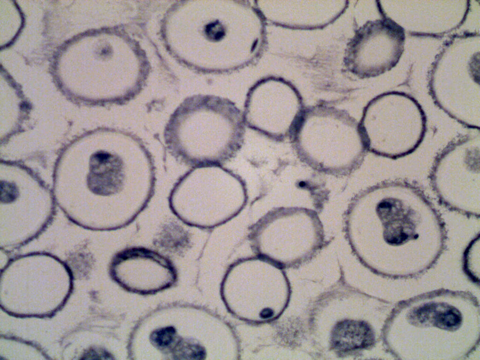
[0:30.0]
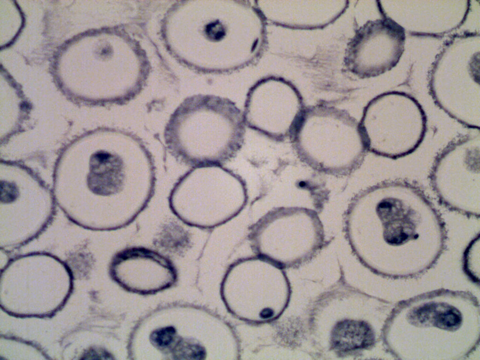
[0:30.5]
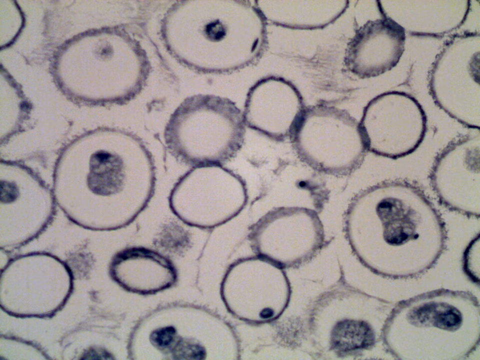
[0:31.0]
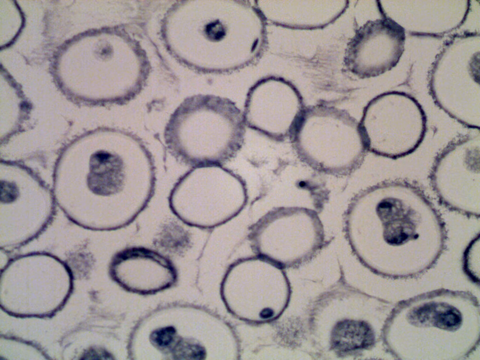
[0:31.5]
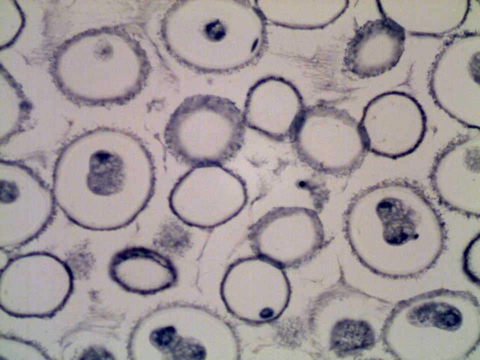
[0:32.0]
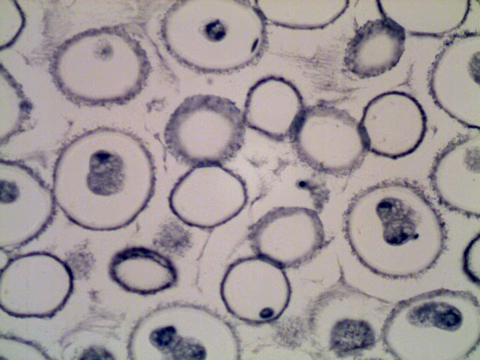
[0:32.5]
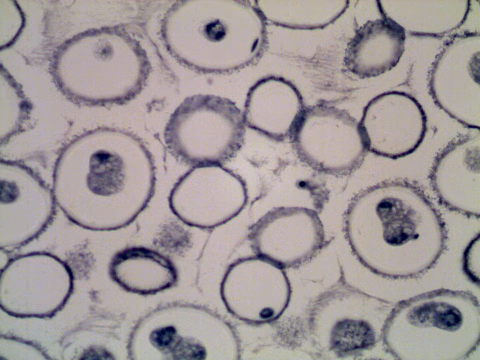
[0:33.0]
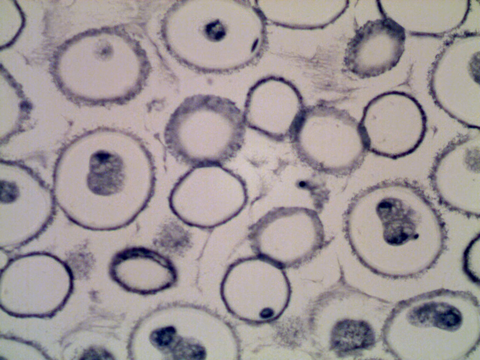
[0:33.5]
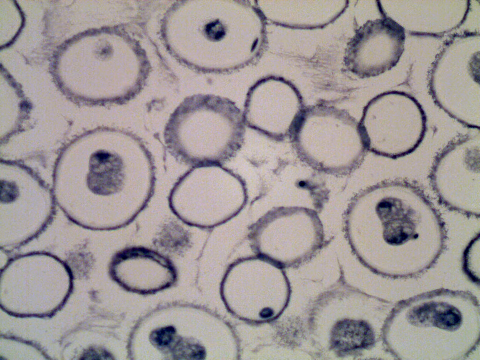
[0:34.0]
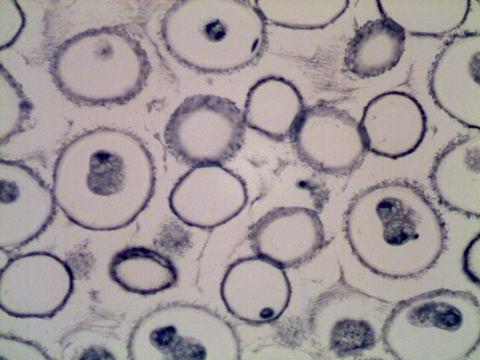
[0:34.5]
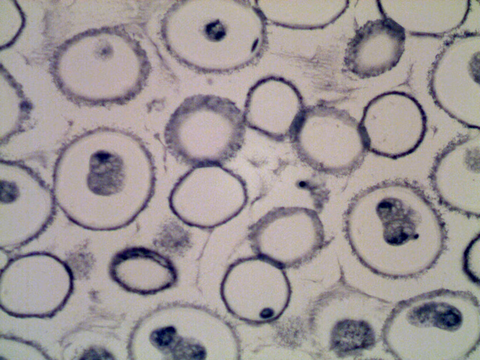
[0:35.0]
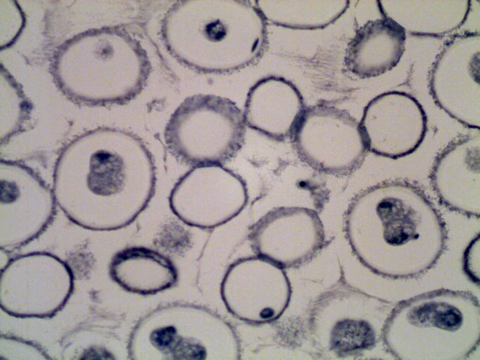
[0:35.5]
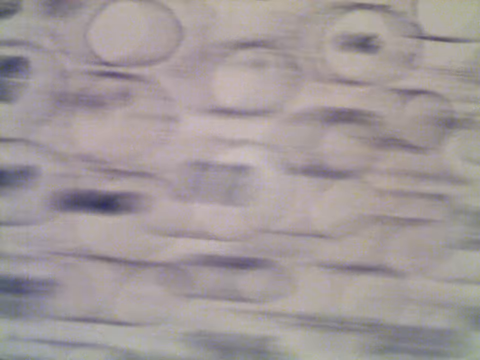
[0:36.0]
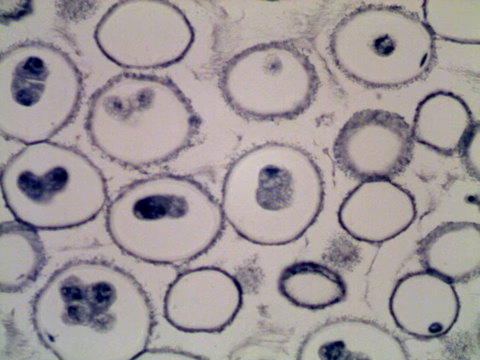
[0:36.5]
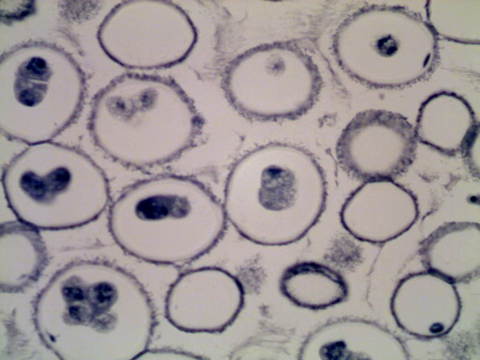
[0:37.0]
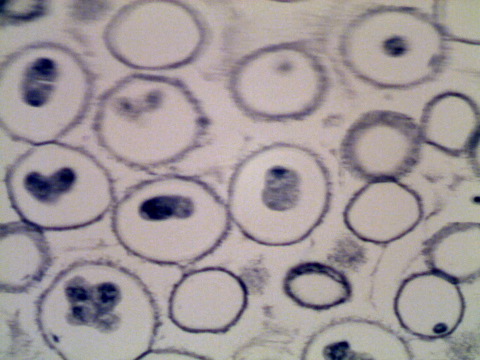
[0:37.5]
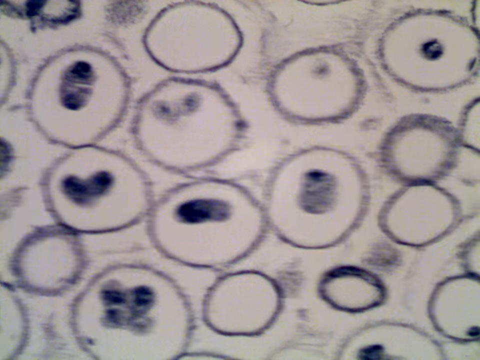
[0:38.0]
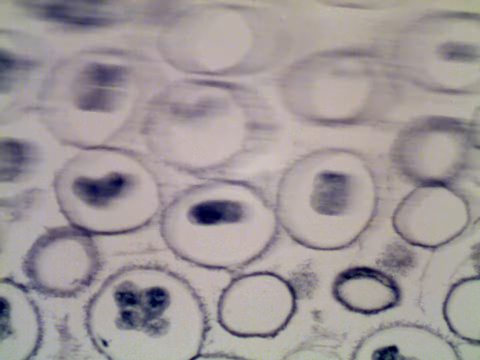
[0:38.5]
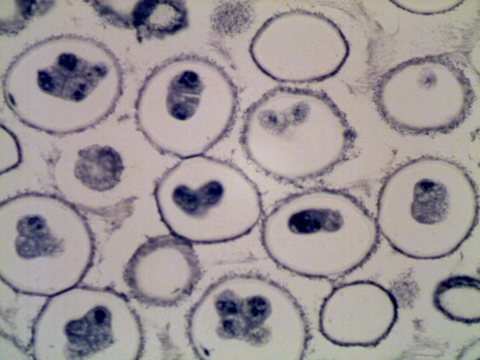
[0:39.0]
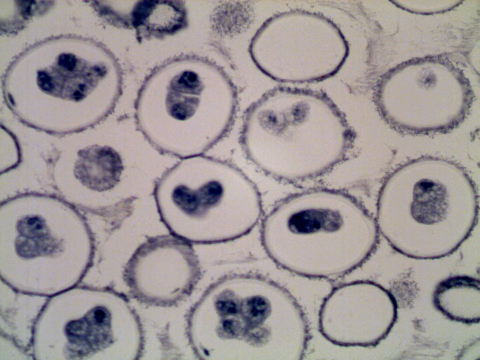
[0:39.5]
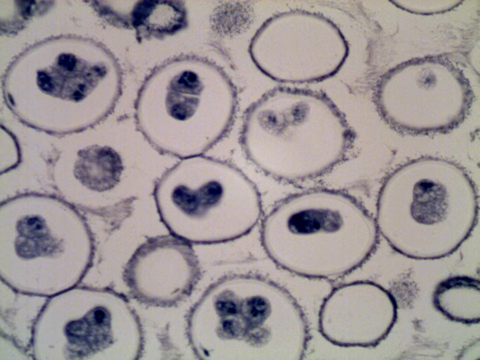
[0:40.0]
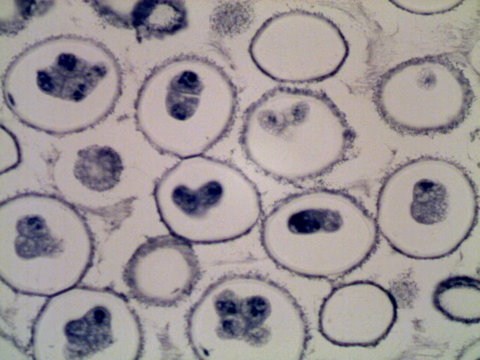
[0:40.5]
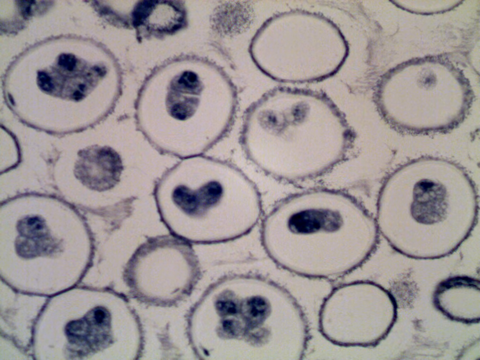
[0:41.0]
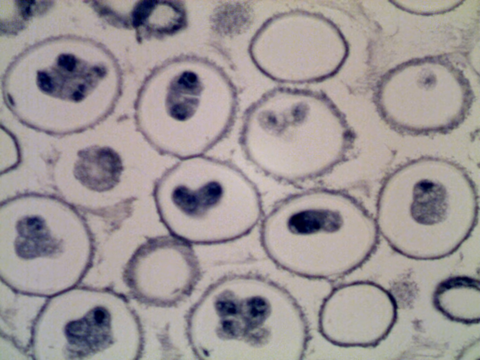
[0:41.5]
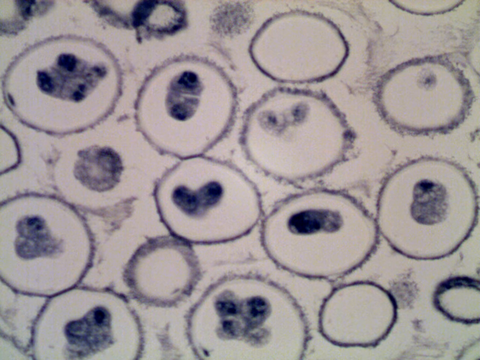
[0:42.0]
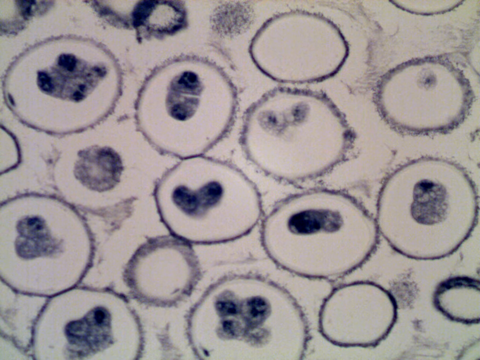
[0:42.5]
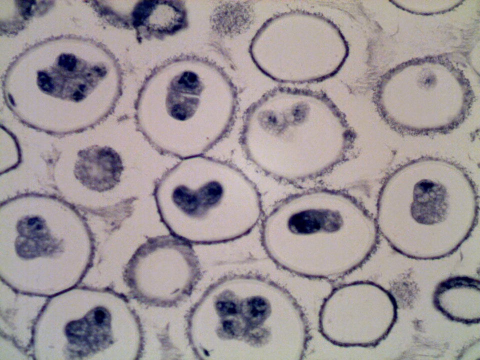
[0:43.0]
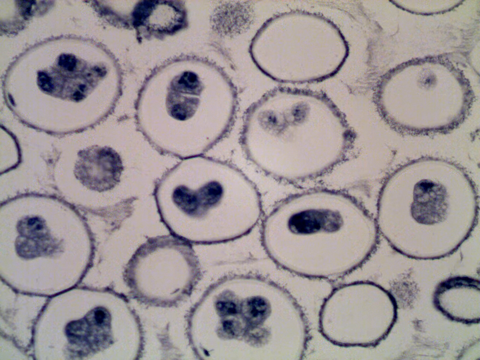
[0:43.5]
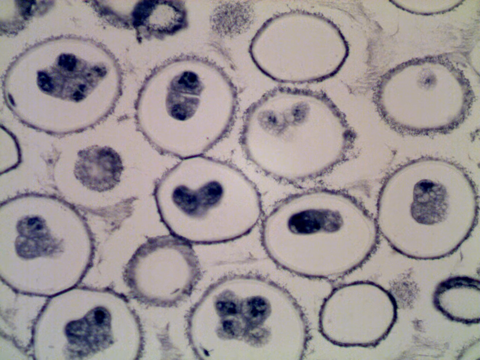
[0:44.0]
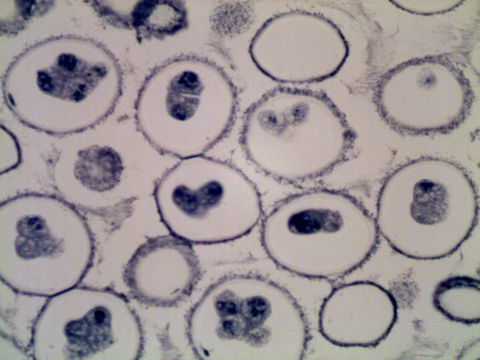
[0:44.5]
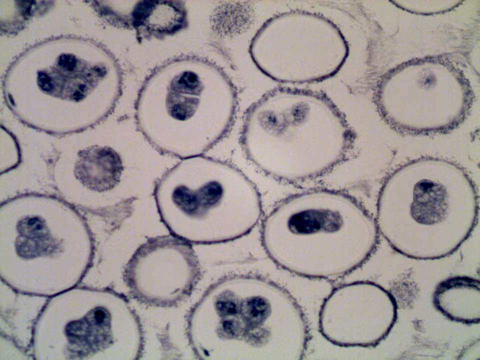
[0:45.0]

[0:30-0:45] Many blue circles appear on the grey background. One circle has a dark blue dot, another has a very soft blue dot, and another has a small peanut-like blue shape. One circle has its blue dot more towards the outer ring, while another has it more in the center. Some circles are more defined, with a clear, thin outline, while others have a wider, rougher-looking outline. The image moves to the left, still showing blue circles mainly with blue dots inside. Two of the circles appear to have the blue color in a heart shape, the one on the left more defined and darker and the one on the right a bit more faded. One circle appears to have a pale shape filled in with the blue color, and one looks like it has a butterfly shape.